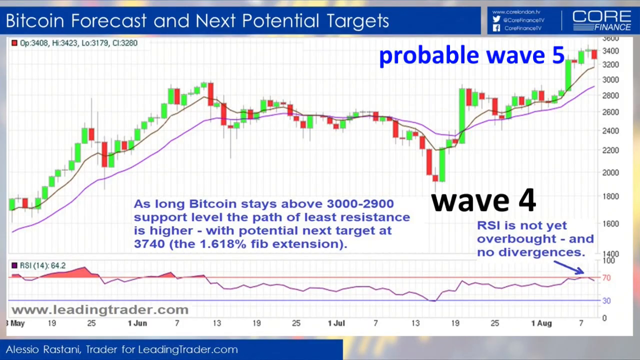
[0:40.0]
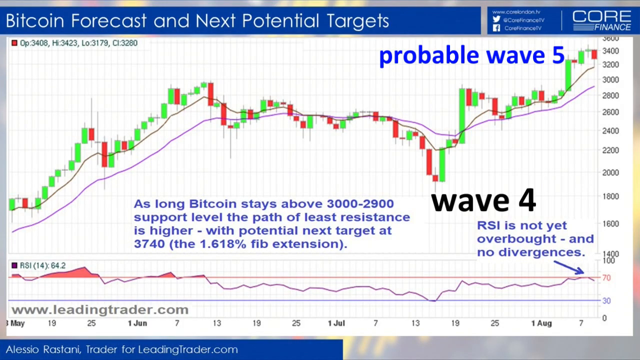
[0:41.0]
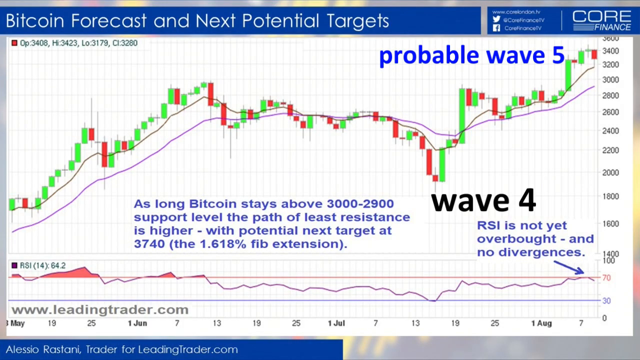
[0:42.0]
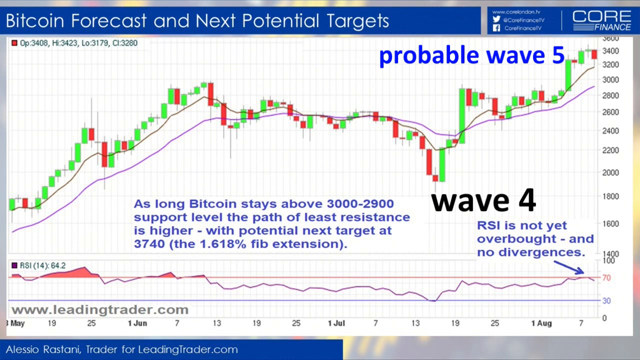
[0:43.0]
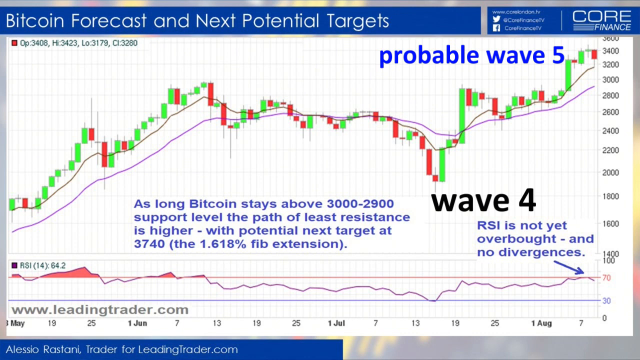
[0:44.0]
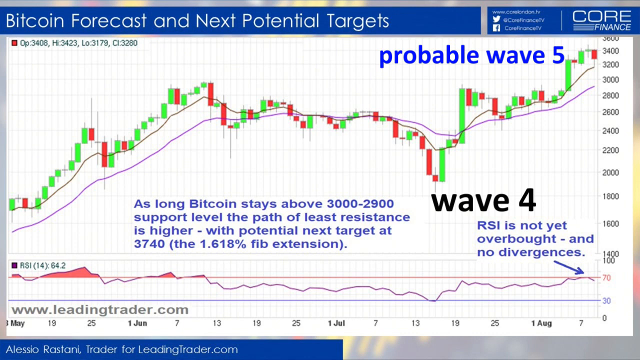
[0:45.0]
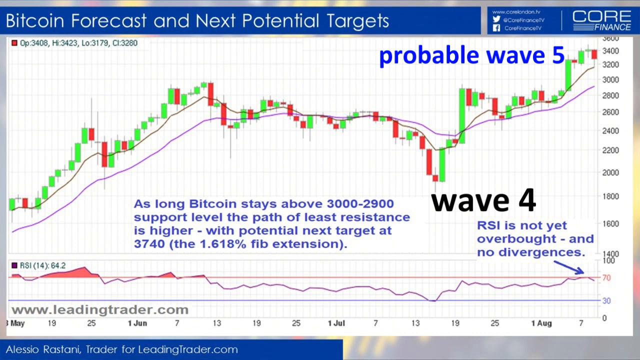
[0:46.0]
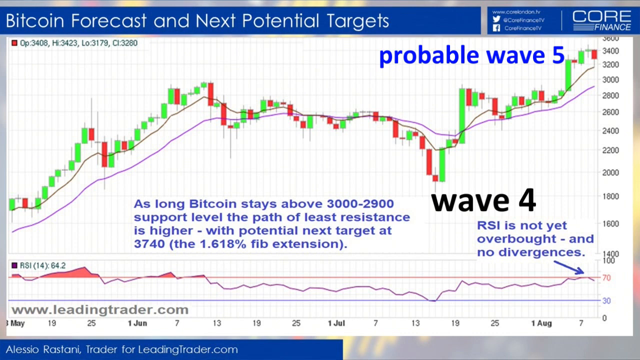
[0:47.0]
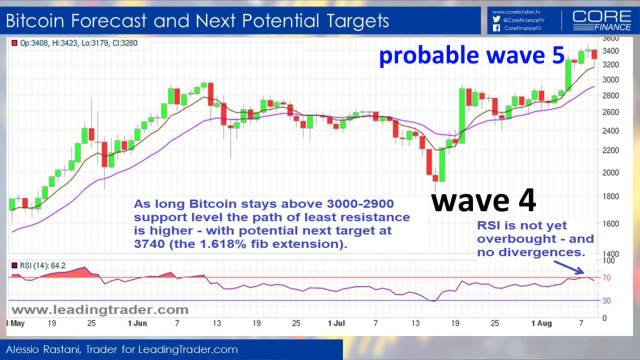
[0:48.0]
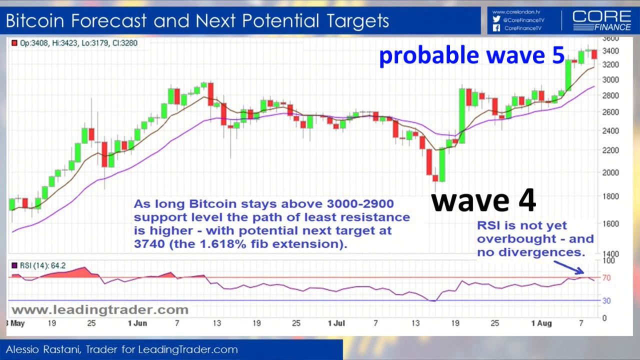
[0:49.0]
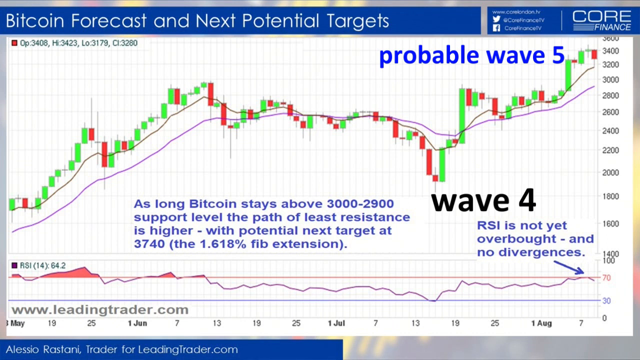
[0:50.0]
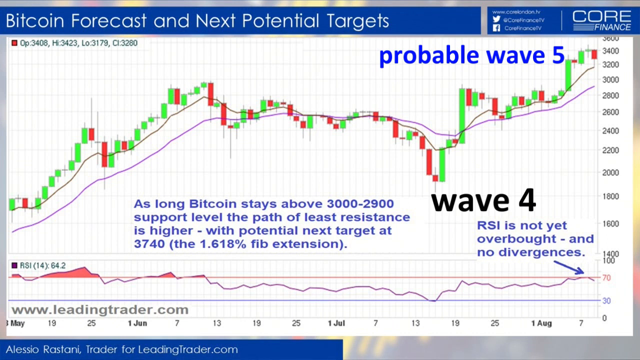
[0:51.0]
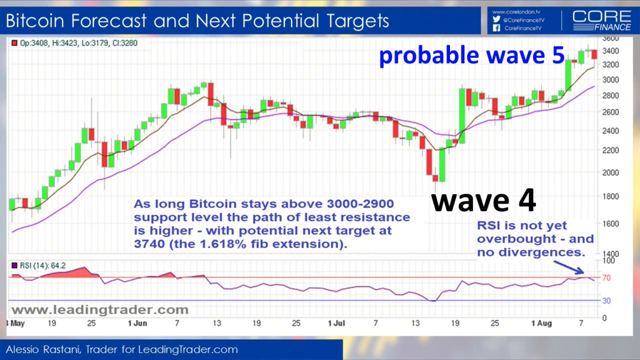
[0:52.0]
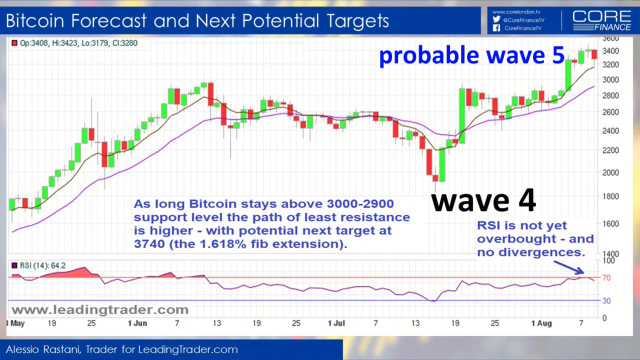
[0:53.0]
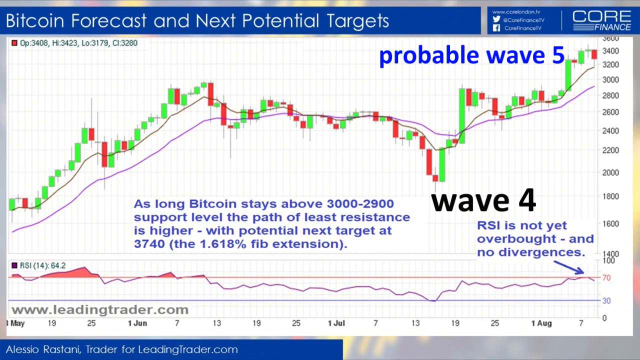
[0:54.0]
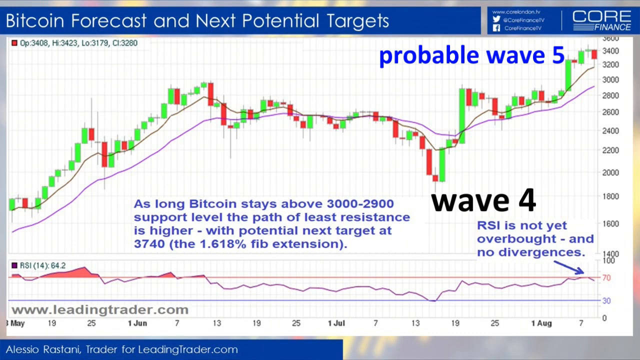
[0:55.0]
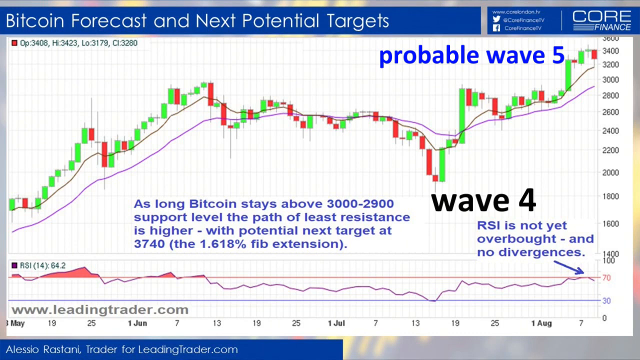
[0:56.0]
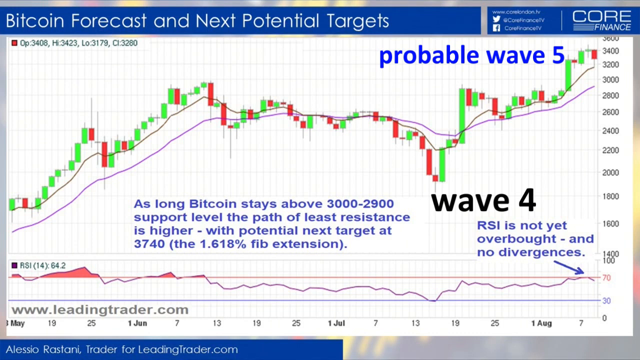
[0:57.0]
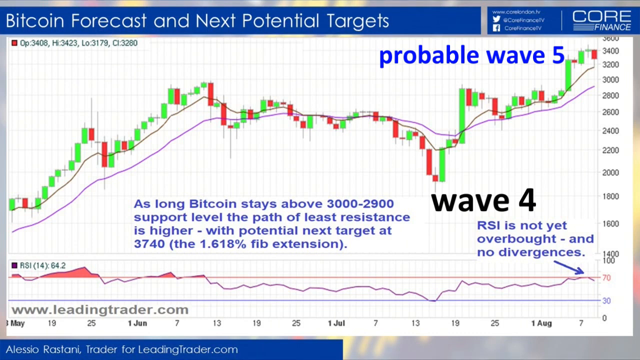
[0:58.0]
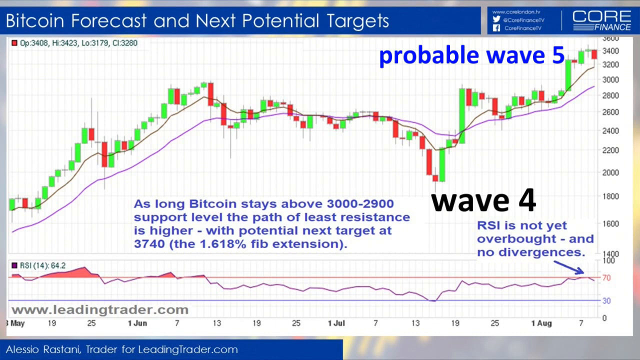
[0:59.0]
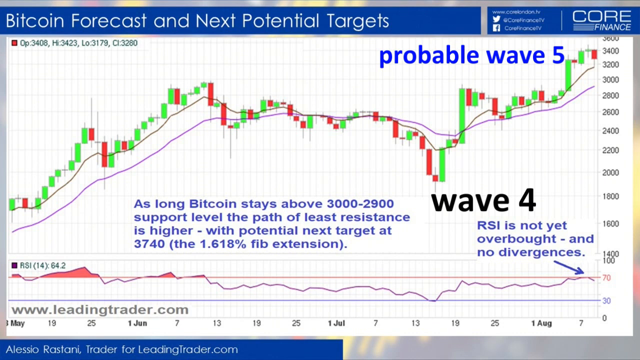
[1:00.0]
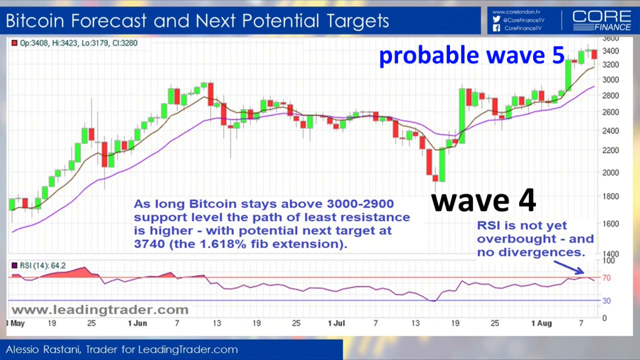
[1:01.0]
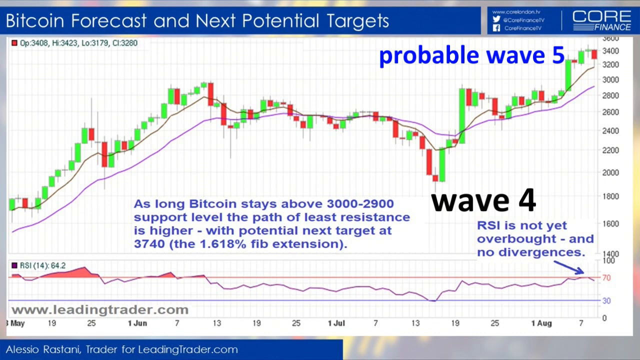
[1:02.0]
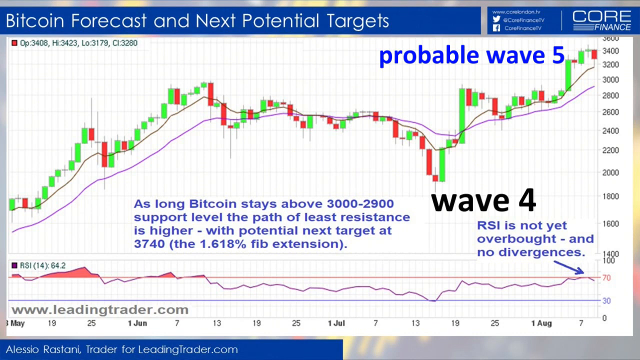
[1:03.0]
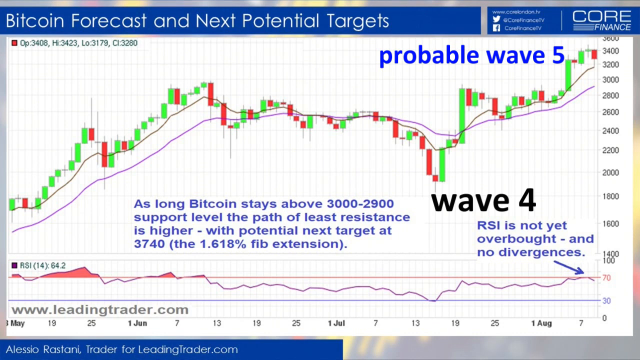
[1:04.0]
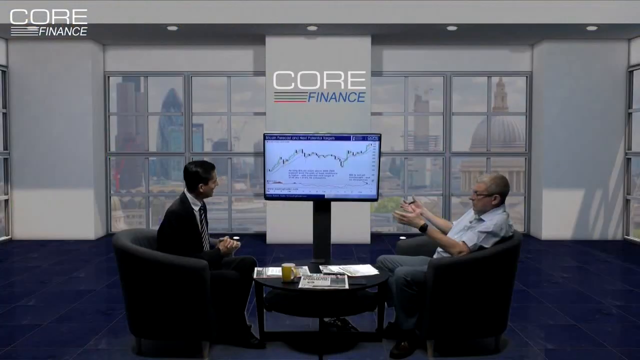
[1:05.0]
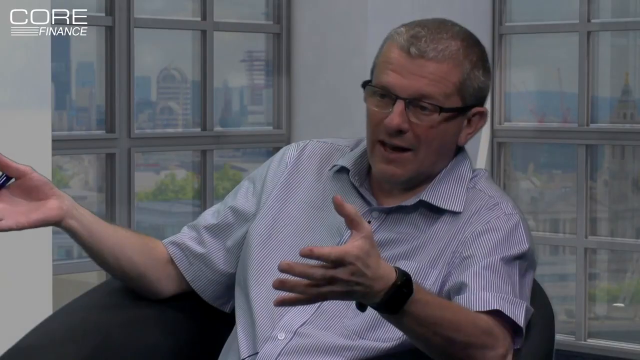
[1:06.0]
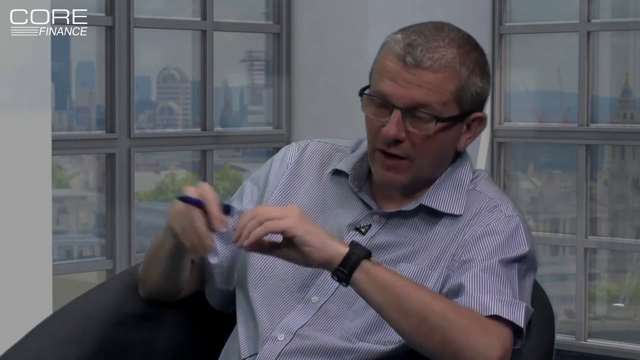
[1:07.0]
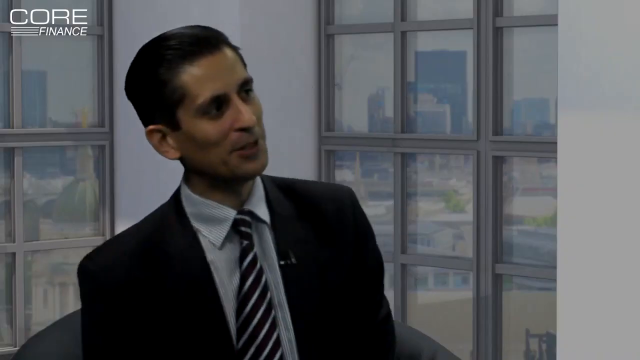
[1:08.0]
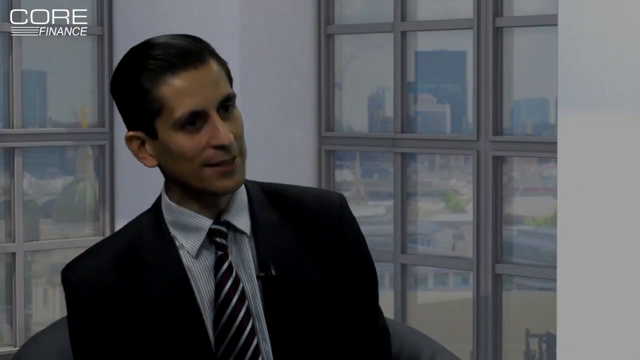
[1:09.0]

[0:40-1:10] The chart shows wave 4 and probably wave 5. Wave 4 is shown above the RSI, and the probable wave 5 text is written in blue above the candlesticks. The scene switches back to the two gentlemen sat down having the conversation about Bitcoin. The second person, in the black suit, also wears a black tie with some white markings. They talk to one another, gesturing with their hands. The chart has a URL at the bottom left, "leadingtrader.com". The trend on the chart is increasing: it starts at the bottom left, goes slightly up and down, and is starting to increase again. The floor is made of neatly placed blue square tiles, the walls are white, and there is some lighting on the wall closer to the big window.